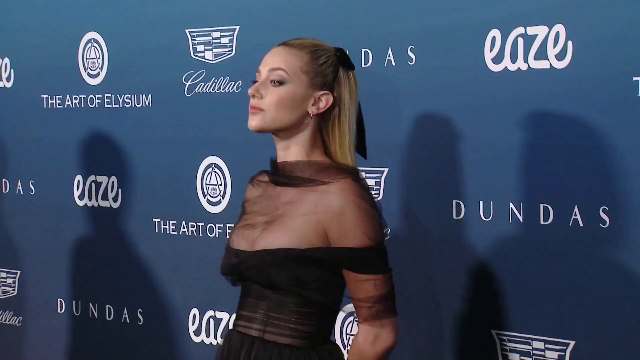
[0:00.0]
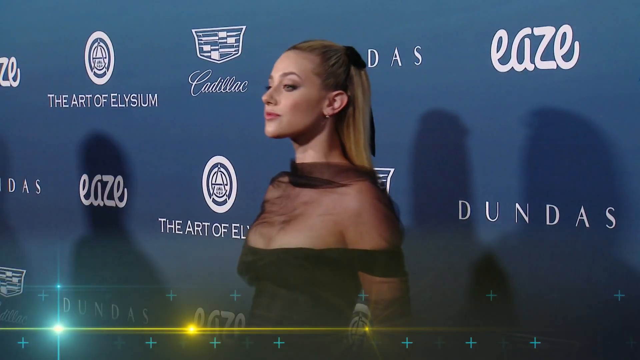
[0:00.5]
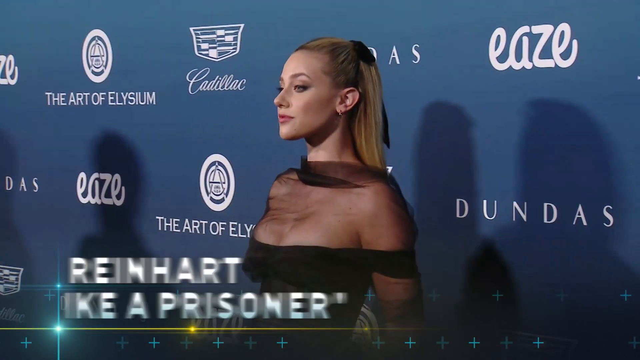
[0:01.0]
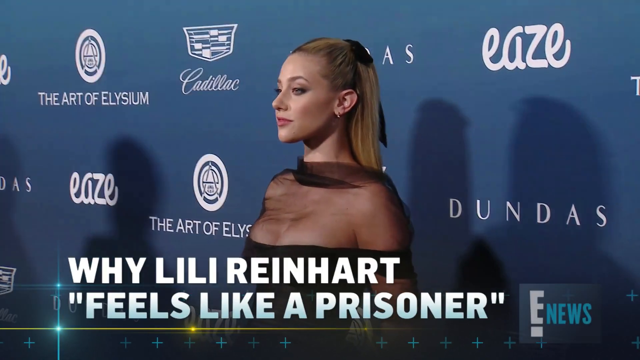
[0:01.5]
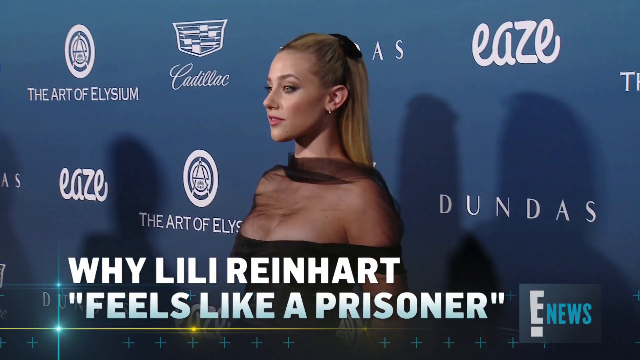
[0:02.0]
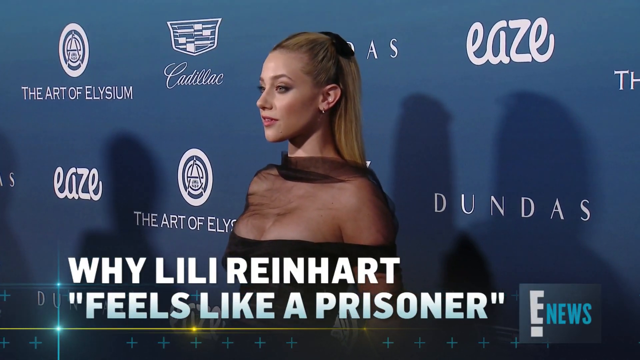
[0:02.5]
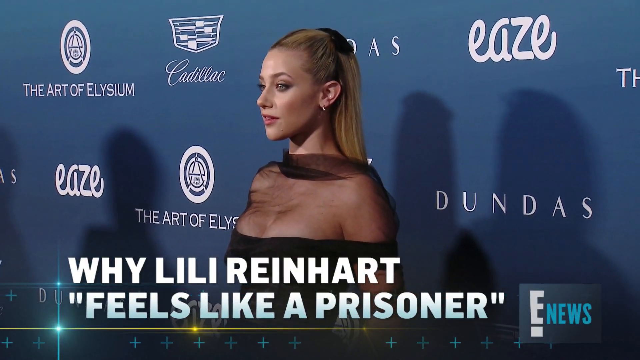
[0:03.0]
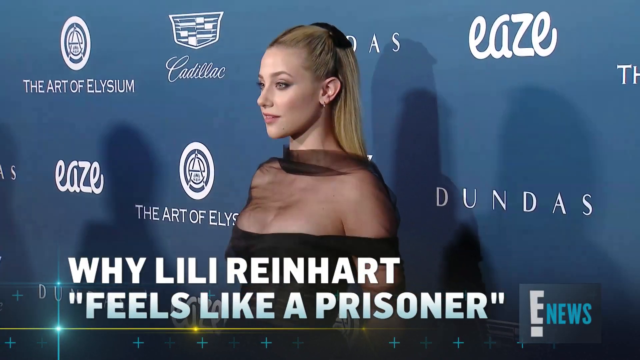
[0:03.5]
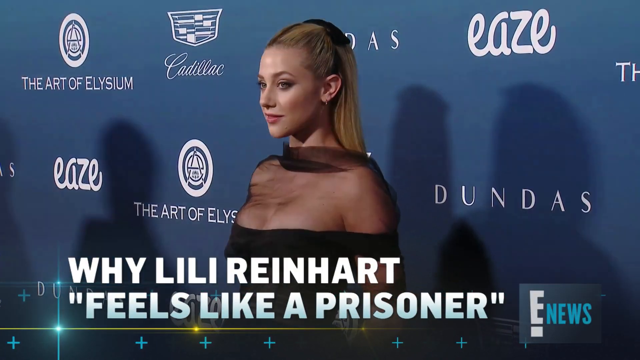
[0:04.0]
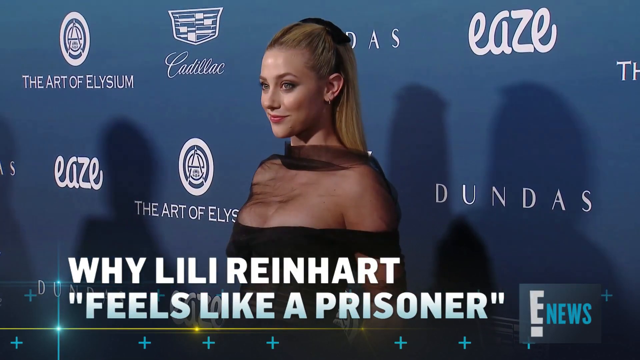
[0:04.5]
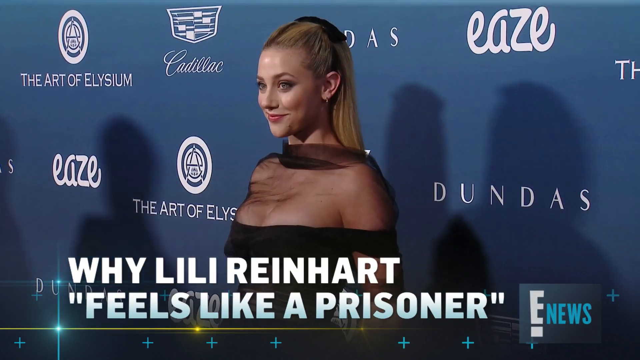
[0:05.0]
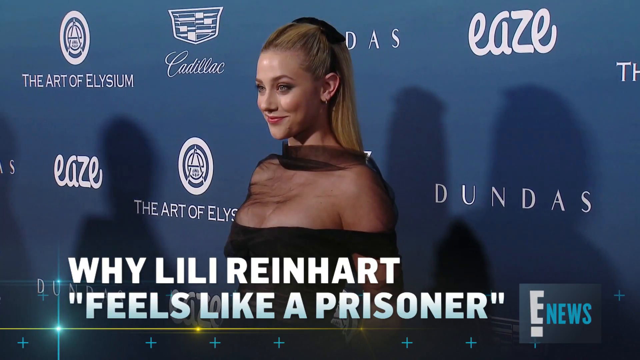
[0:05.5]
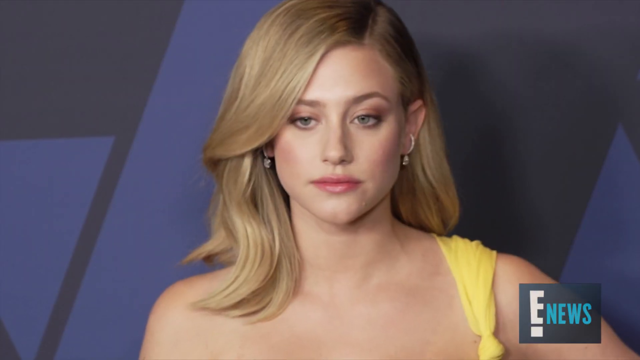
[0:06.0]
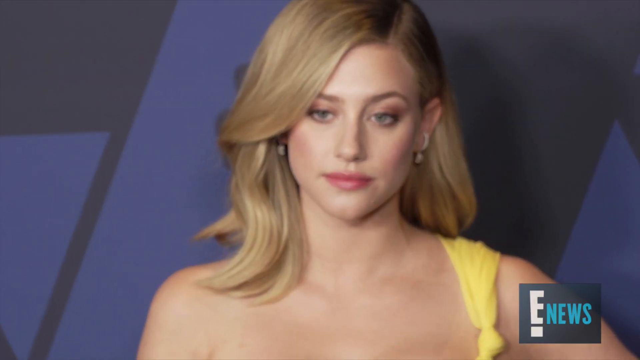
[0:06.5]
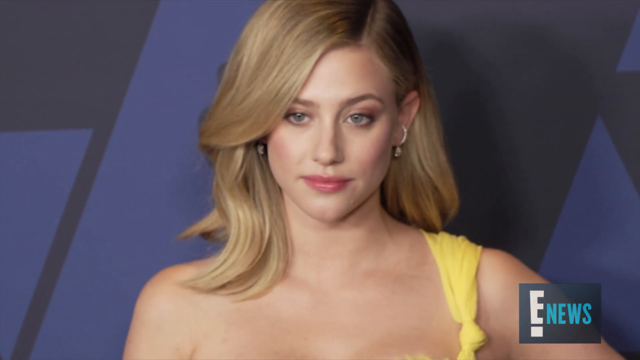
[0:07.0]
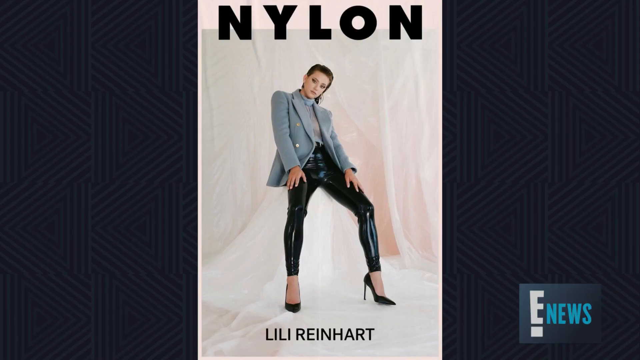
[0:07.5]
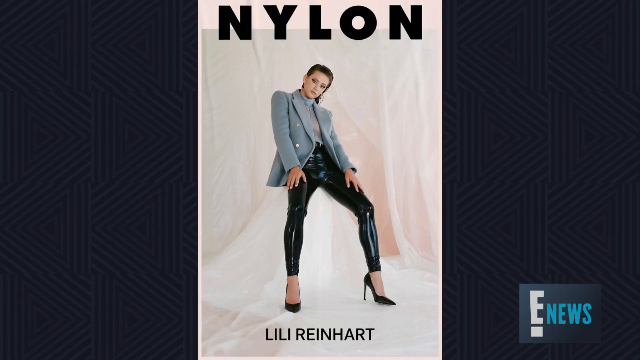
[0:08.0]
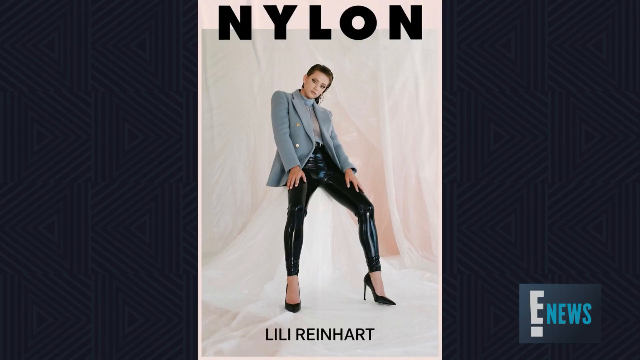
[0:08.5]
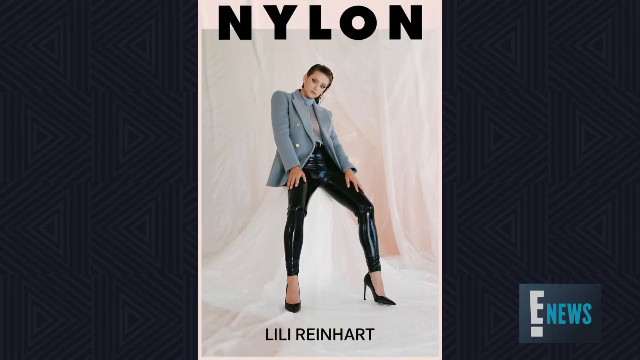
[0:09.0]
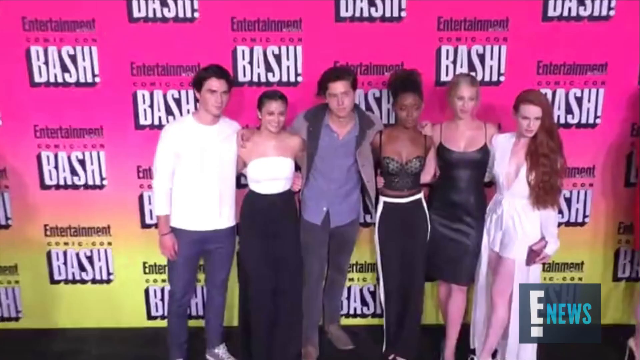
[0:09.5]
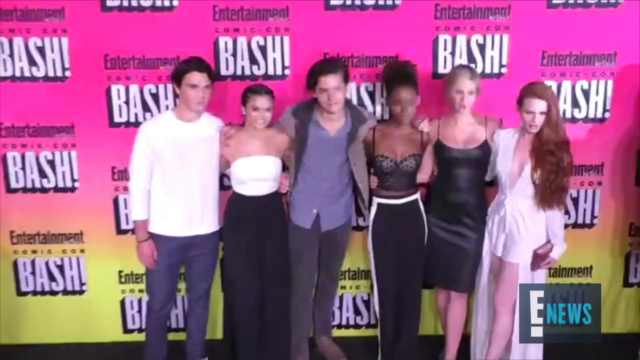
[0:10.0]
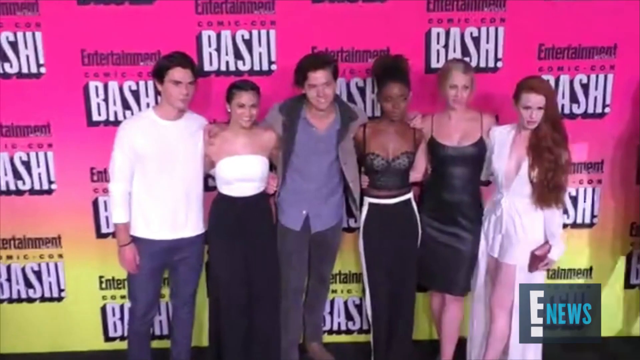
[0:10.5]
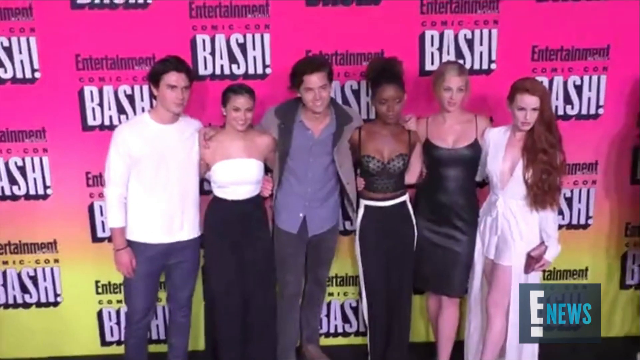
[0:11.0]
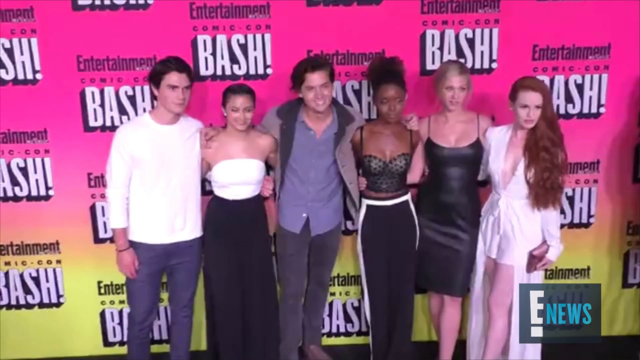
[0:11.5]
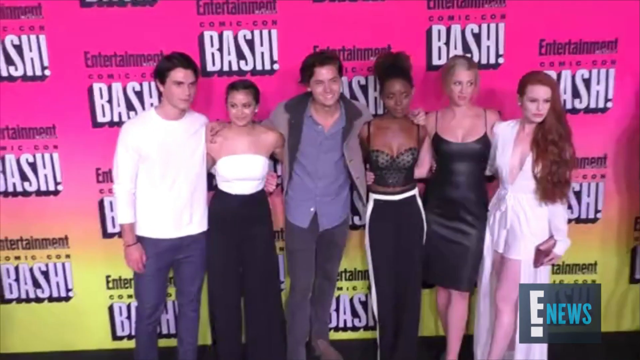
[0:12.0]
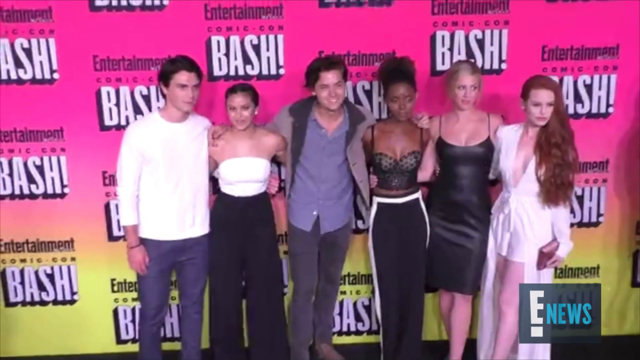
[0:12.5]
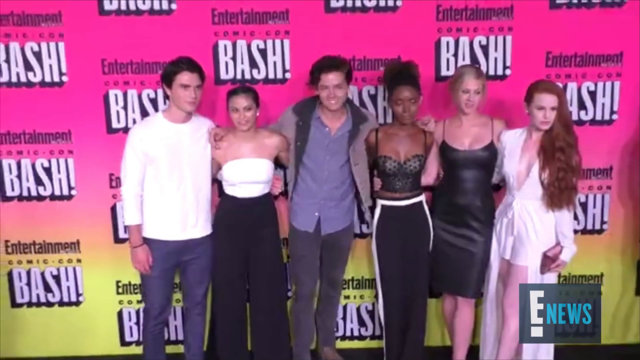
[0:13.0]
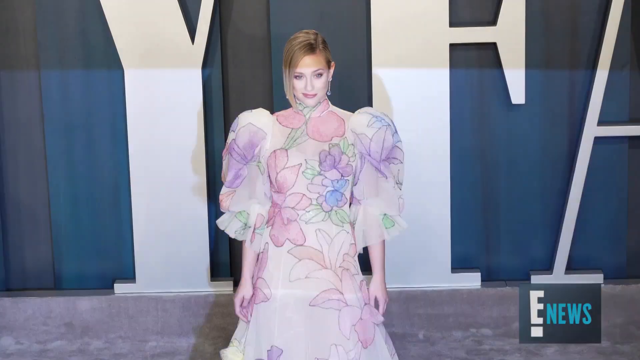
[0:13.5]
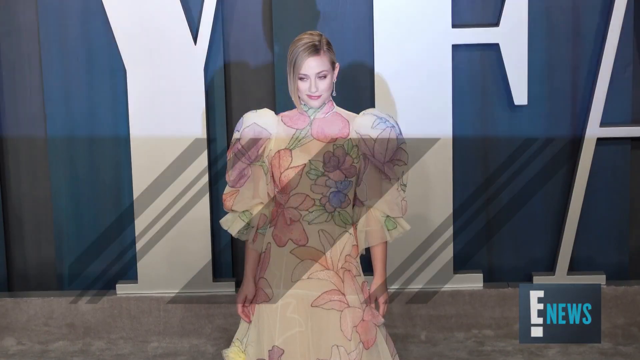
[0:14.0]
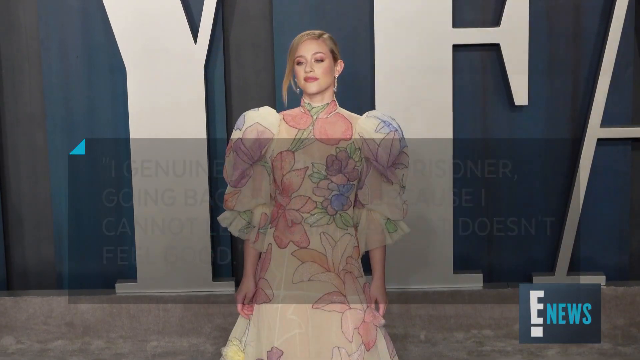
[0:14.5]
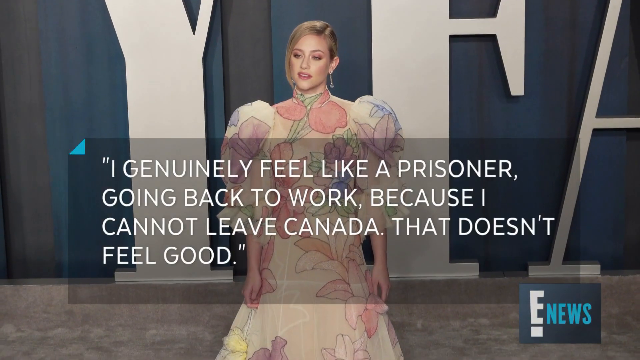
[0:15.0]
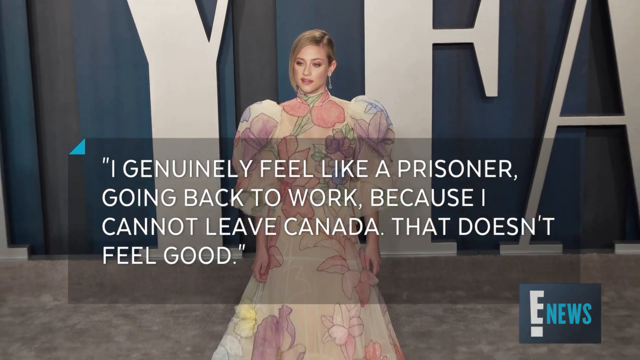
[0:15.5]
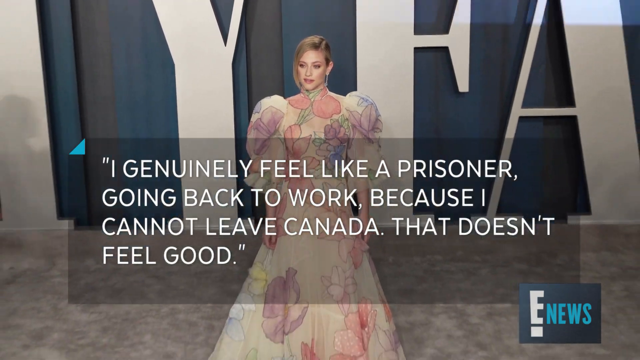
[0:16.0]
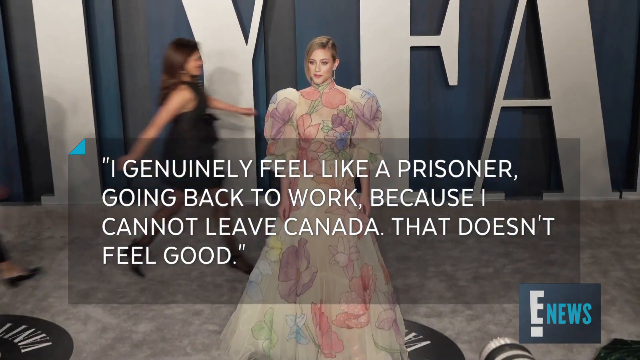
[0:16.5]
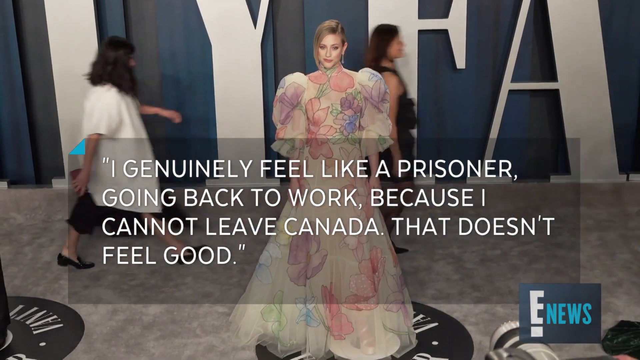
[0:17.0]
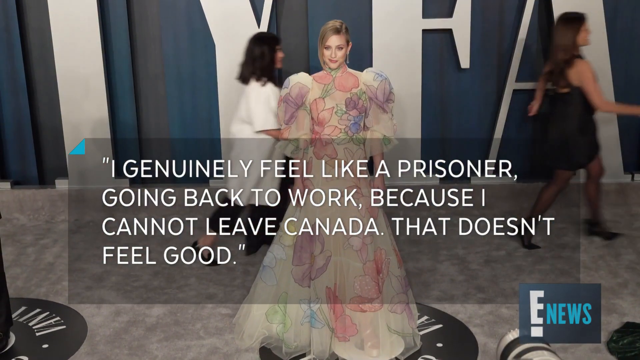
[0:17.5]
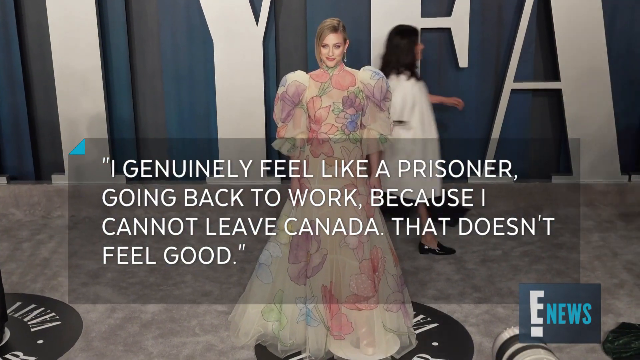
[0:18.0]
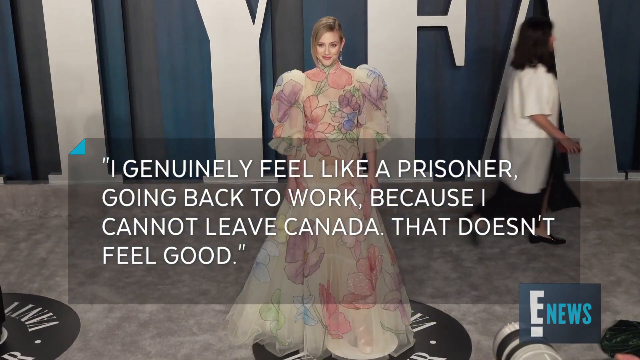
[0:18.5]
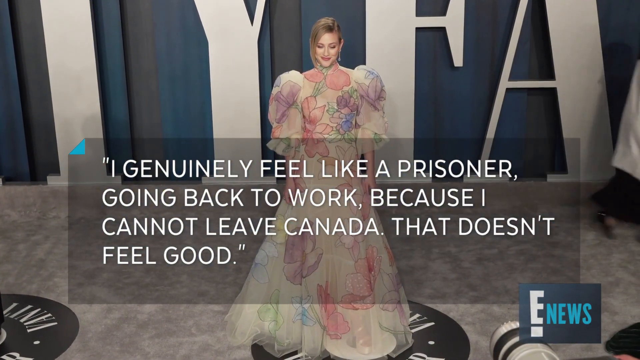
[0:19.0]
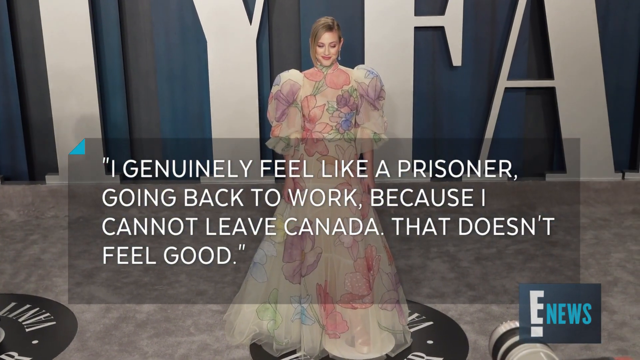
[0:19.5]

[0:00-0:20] The video opens at what looks like some sort of event. A blonde woman with her hair pulled back wears a black dress with a sheer top, the rest of it solid black. On-screen text reads "Why Lily Reinhardt 'feels like a prisoner'". She stands against a blue wall covered with many logos, smiling as a bunch of photographers take pictures of her. She then appears in a different setting with her hair down, wearing a yellow dress. Next, the same woman looks to be on the cover of a magazine called Nylon: she sits in a room, perched atop a white platform, wearing a blue suit jacket, vinyl pants and black high-heeled shoes. She is then pictured in a group photo with a bunch of young, diverse people.